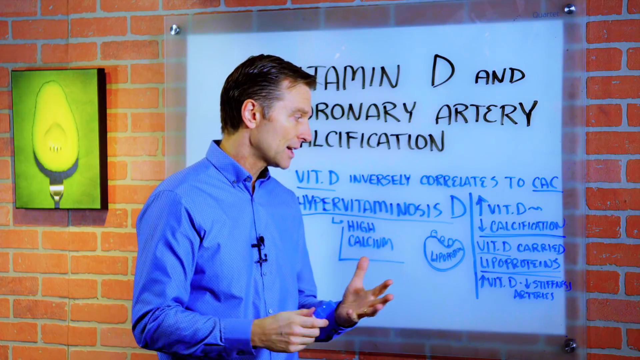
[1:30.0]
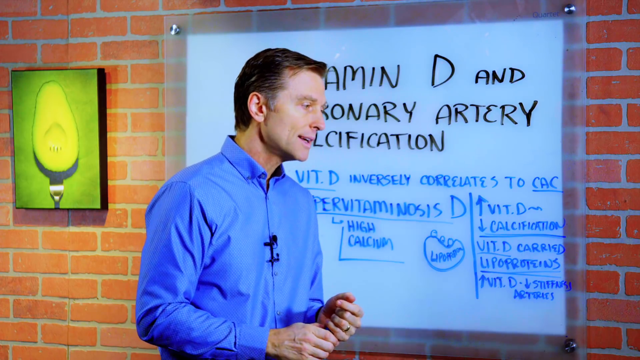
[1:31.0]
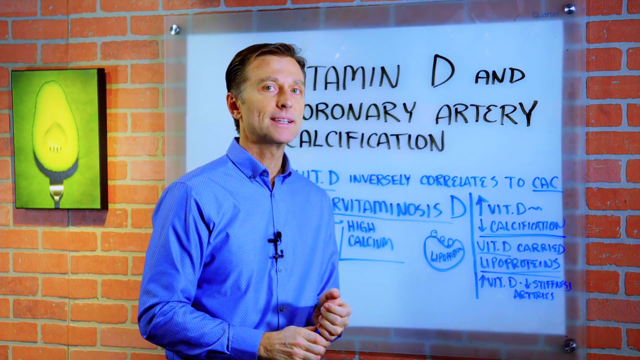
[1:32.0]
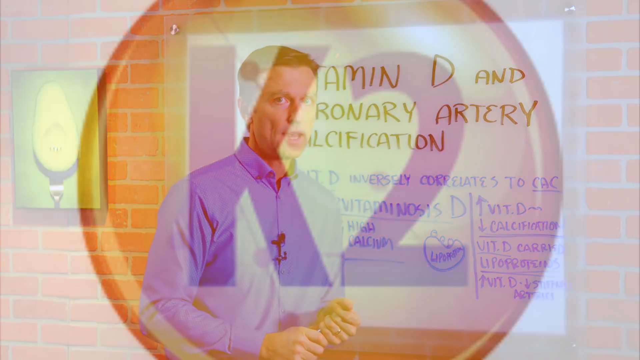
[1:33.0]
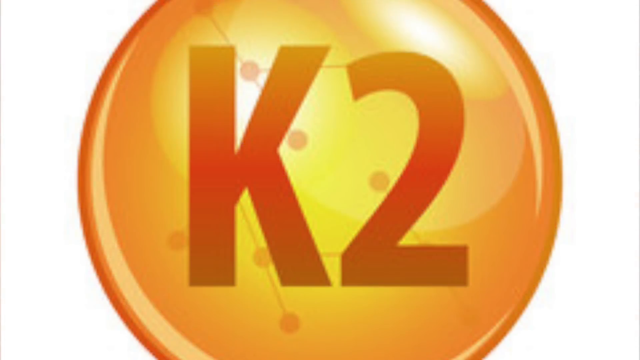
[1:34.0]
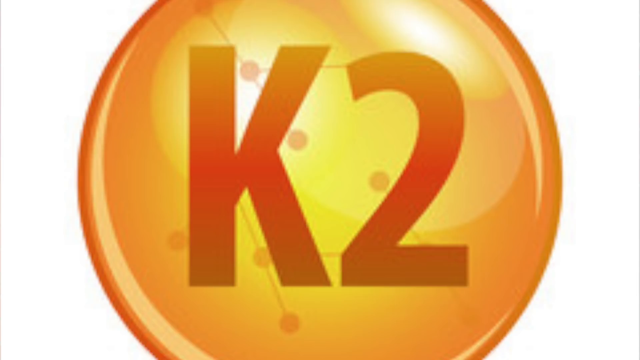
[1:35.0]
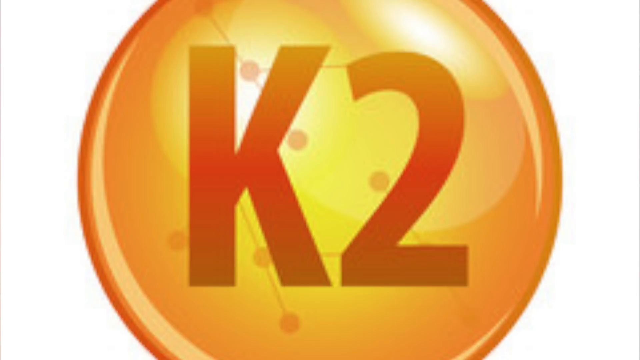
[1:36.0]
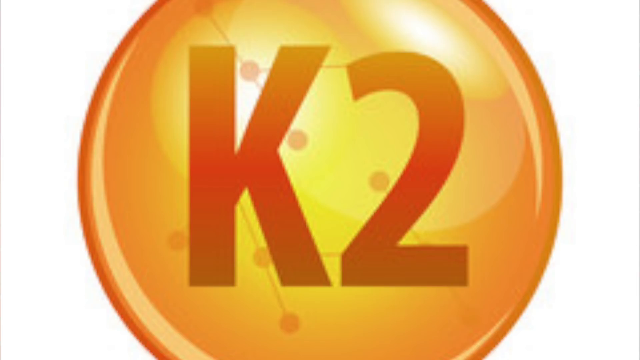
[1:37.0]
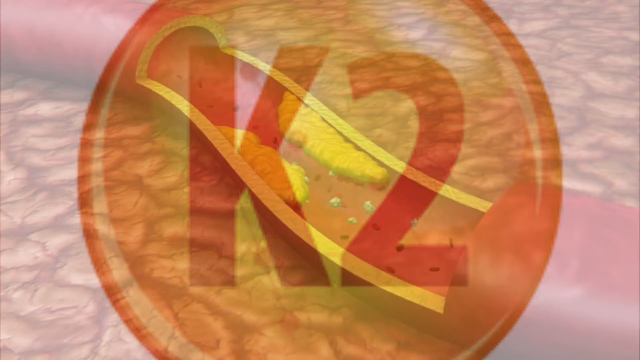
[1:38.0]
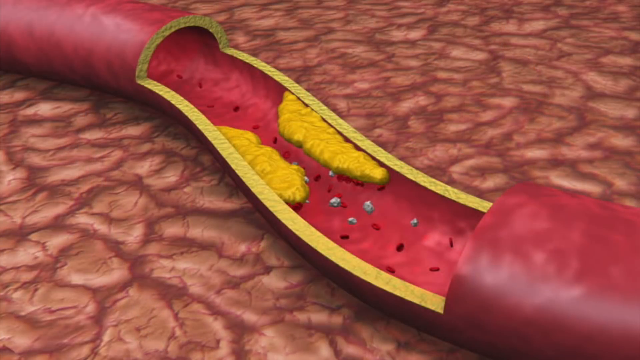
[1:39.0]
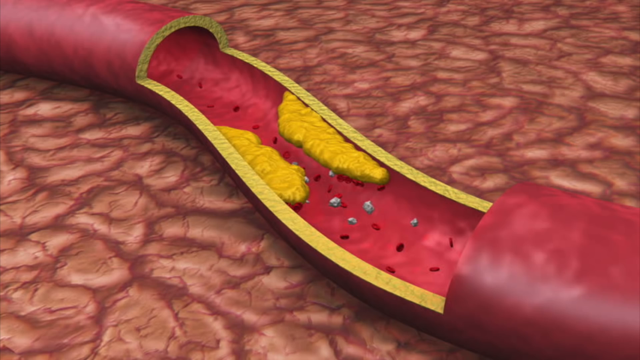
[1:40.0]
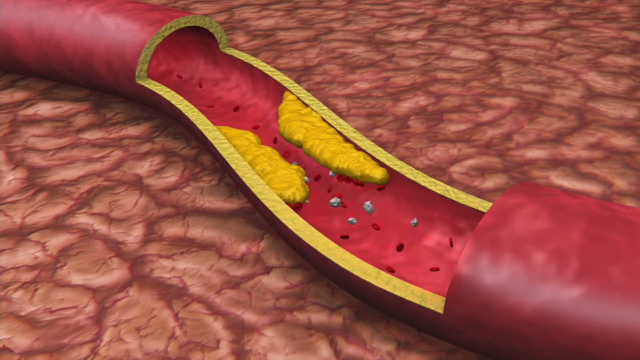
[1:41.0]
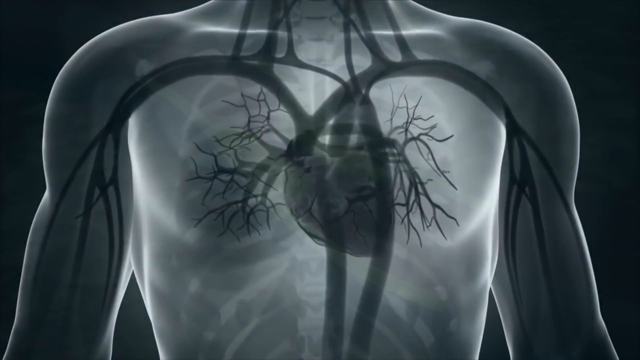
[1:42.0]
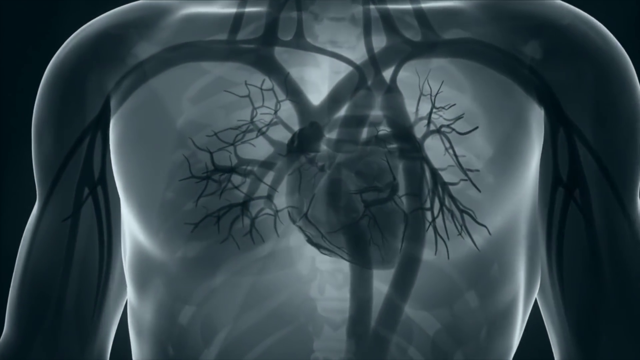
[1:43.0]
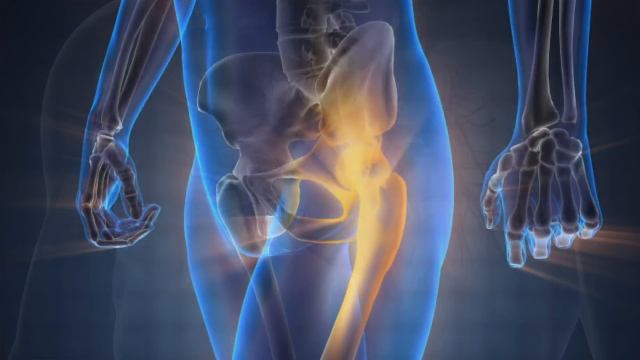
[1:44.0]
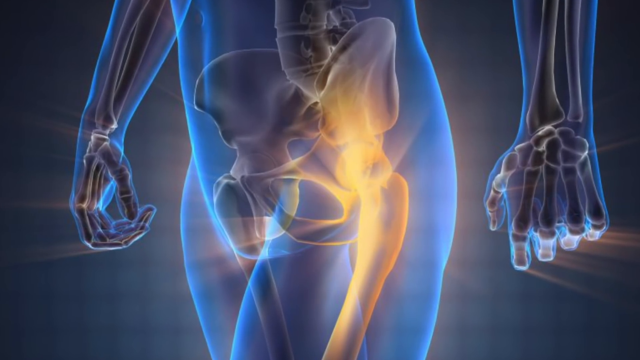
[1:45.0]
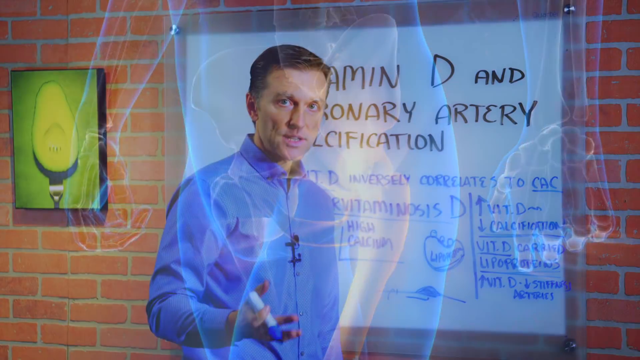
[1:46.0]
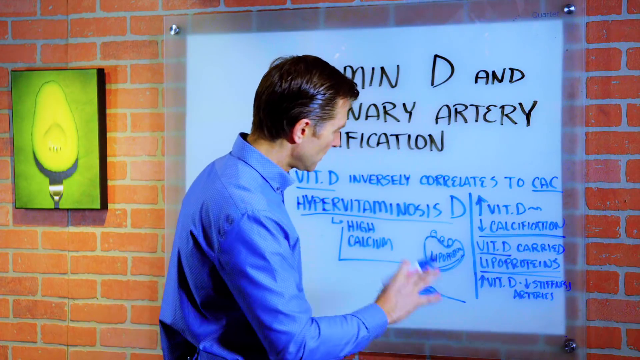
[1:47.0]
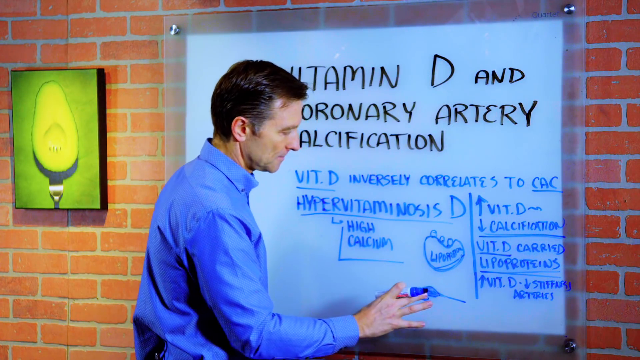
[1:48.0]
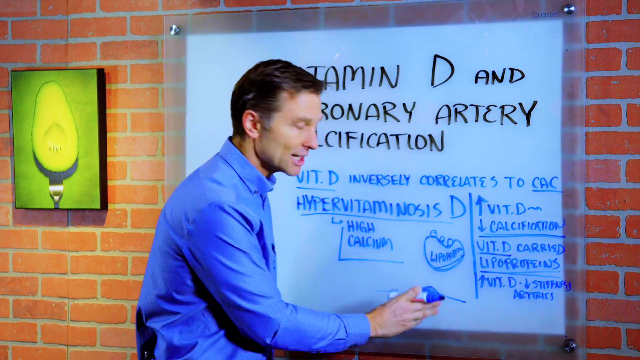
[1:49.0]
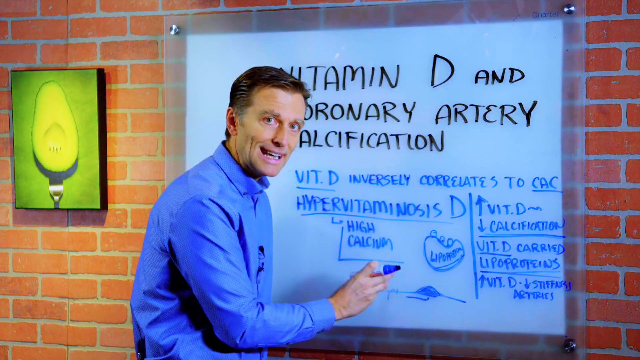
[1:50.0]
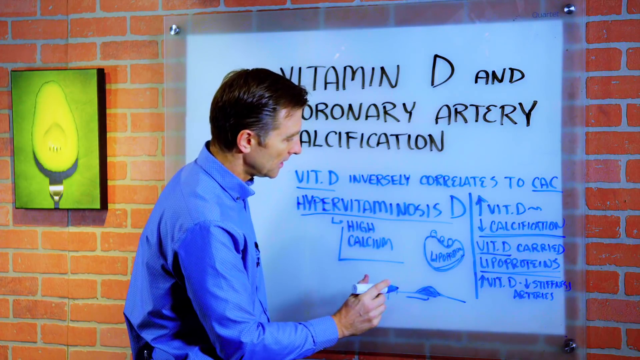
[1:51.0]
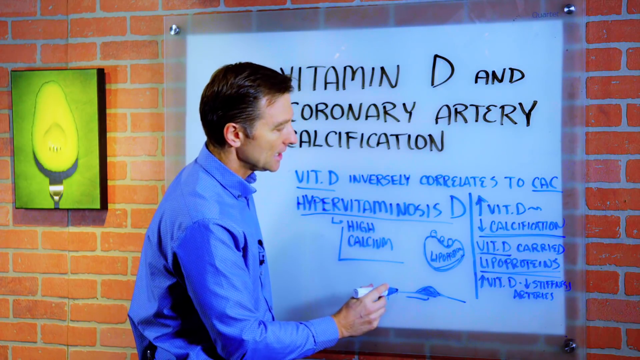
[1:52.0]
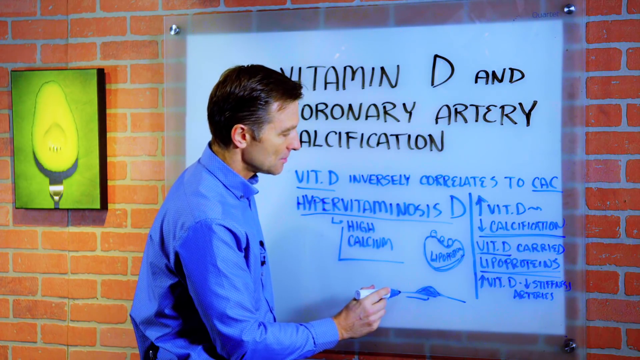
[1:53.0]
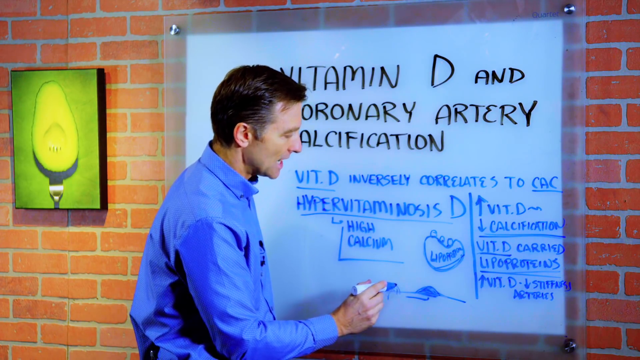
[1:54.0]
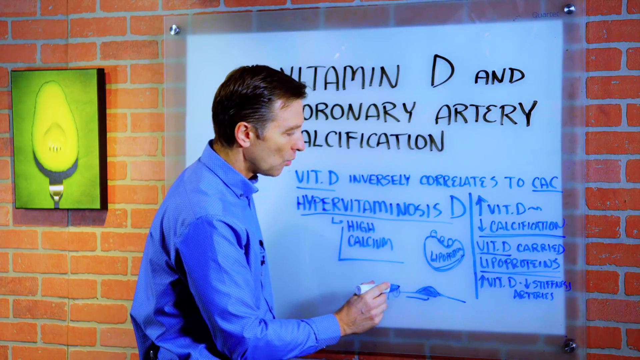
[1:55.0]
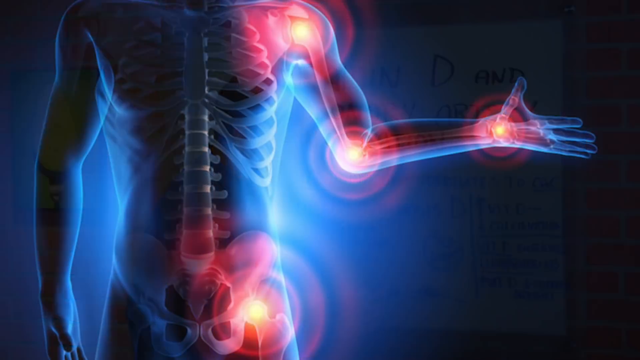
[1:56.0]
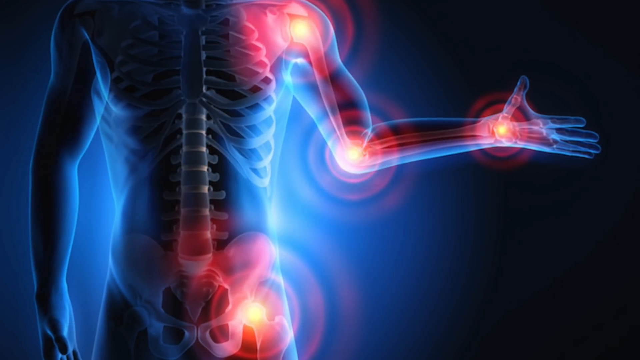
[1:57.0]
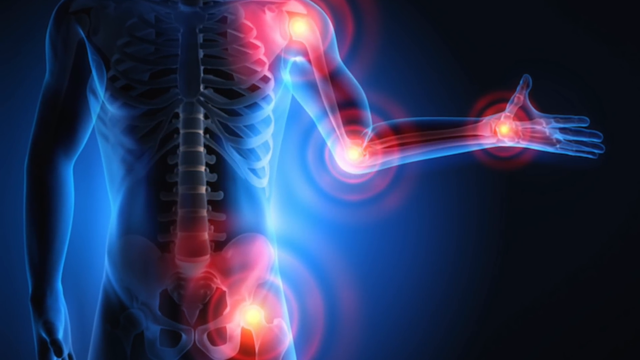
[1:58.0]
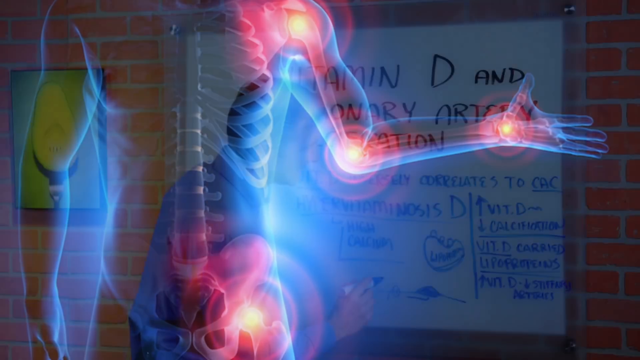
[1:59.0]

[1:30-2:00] The man's shirt collar is a little tight, while the sleeves are looser, with wrinkles on his upper arm and many wrinkles at his elbow. There is a thick band around his wrist. The microphone looks like it has two parts, a smaller one below and a bigger one above, of the same shape, kind of an L on the side. The top button of his shirt collar is maybe blue, blending in with the shirt. The video cuts to a white screen with a large orange bubble that says "k2" in the middle. It shimmers and looks 3D and somewhat see-through, with little darker orange circles all around it and faint lines, probably like the earlier simulation with three lines connected to a circle in the middle. It then shows a cross-sectional piece removed from the red tube clusters, with a long, almost crescent-shaped yellowish cell on the side. A 3D simulation then looks through the human body at the lungs and heart. The video returns to the man talking and pointing toward the bottom.